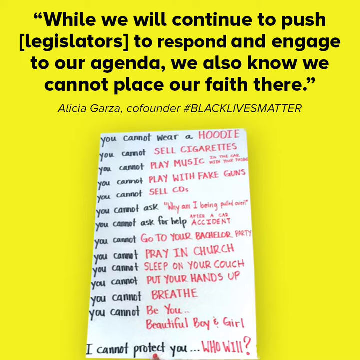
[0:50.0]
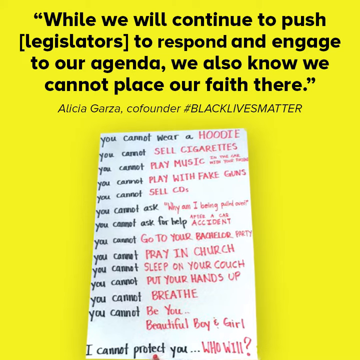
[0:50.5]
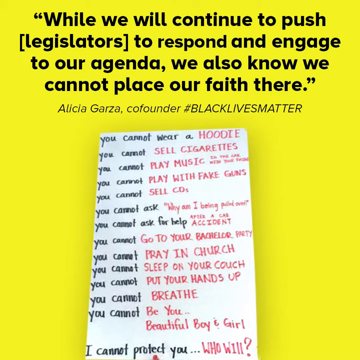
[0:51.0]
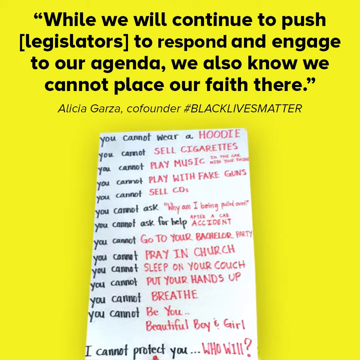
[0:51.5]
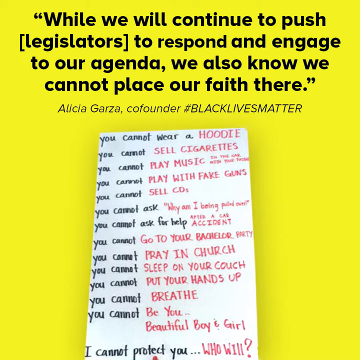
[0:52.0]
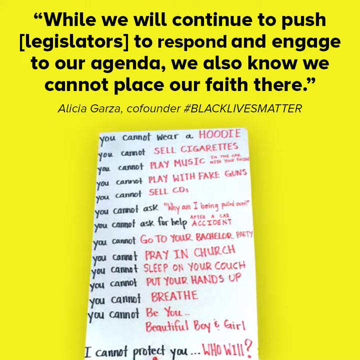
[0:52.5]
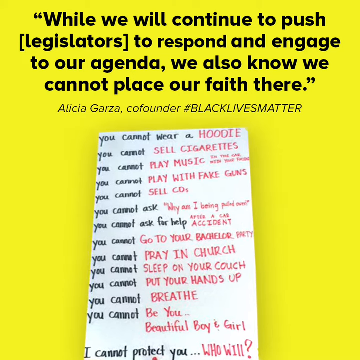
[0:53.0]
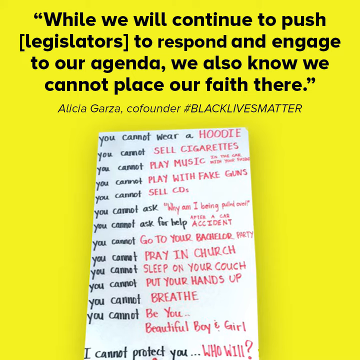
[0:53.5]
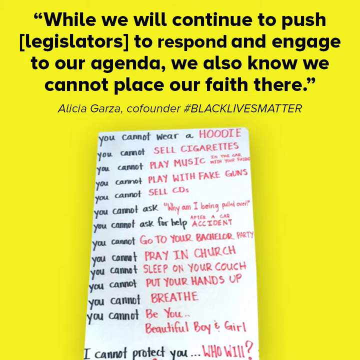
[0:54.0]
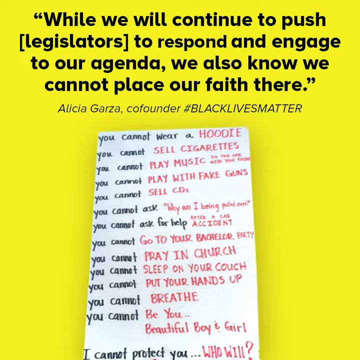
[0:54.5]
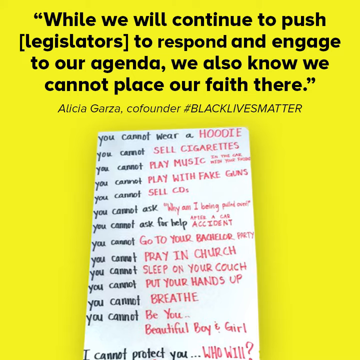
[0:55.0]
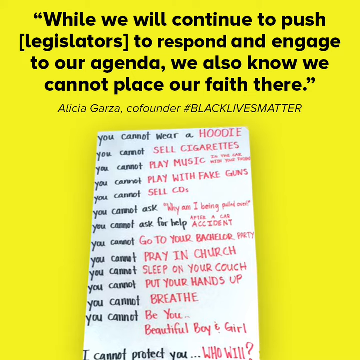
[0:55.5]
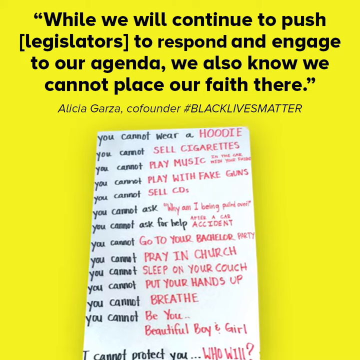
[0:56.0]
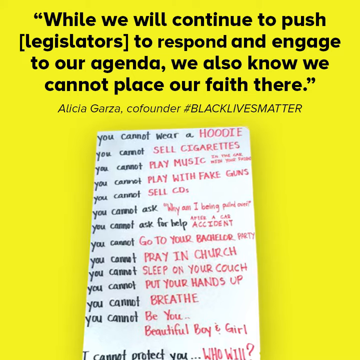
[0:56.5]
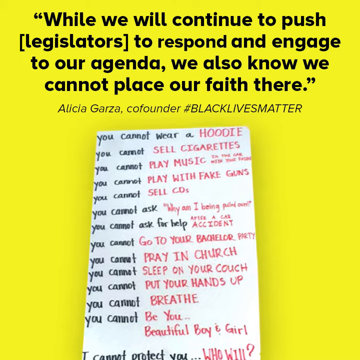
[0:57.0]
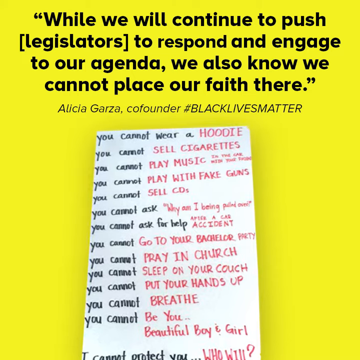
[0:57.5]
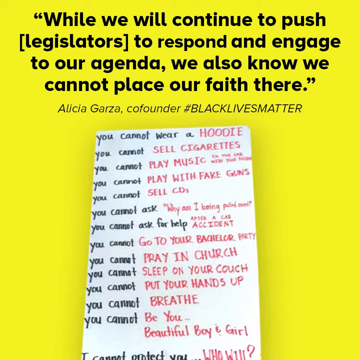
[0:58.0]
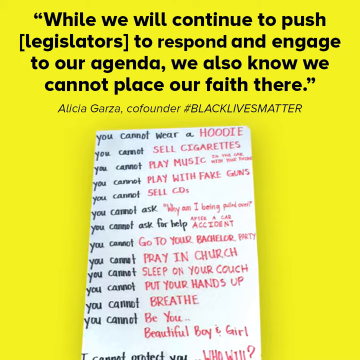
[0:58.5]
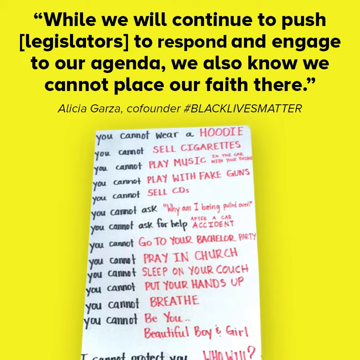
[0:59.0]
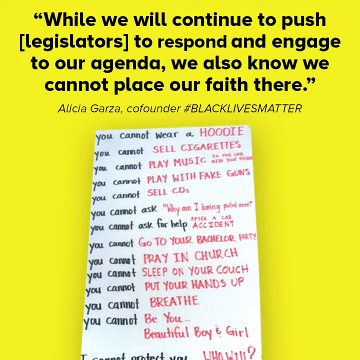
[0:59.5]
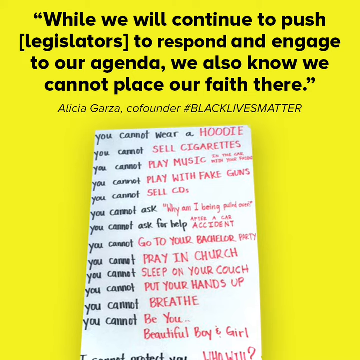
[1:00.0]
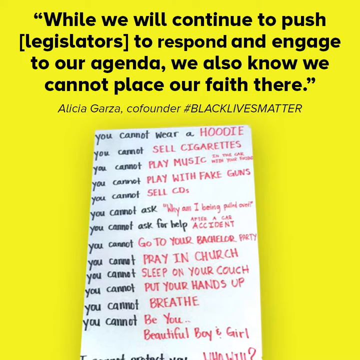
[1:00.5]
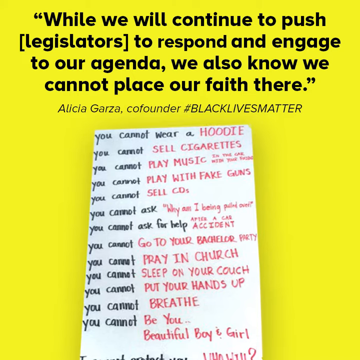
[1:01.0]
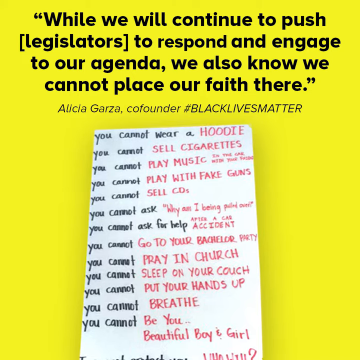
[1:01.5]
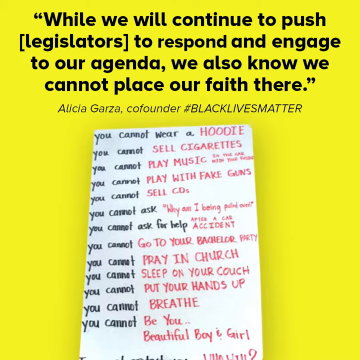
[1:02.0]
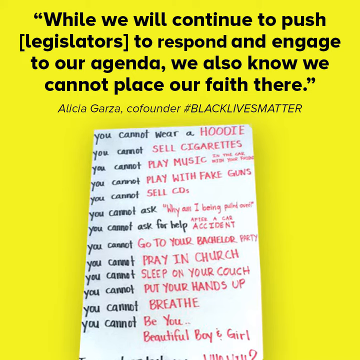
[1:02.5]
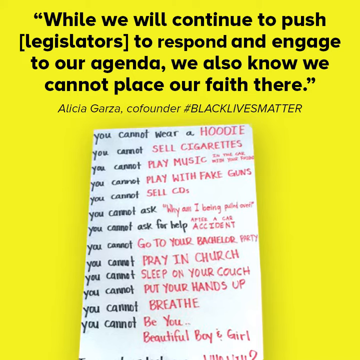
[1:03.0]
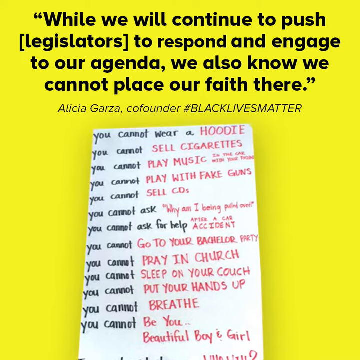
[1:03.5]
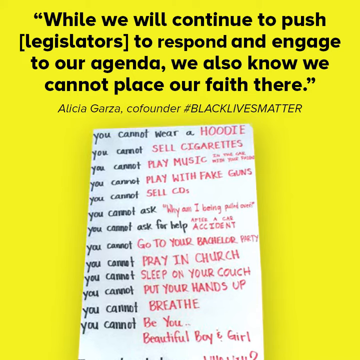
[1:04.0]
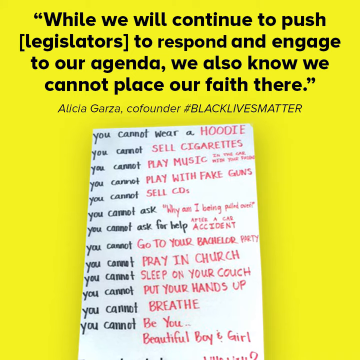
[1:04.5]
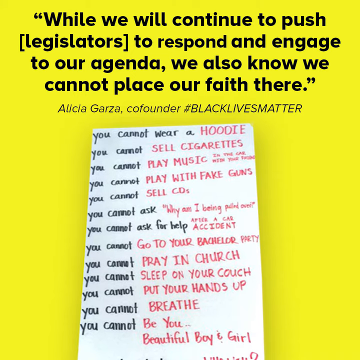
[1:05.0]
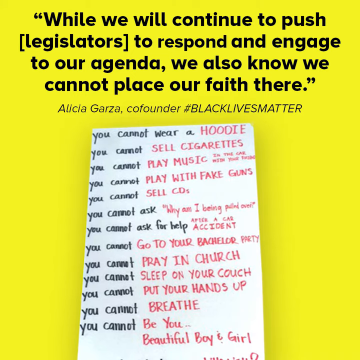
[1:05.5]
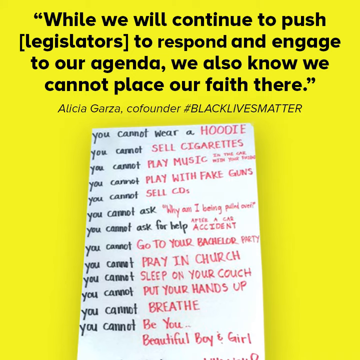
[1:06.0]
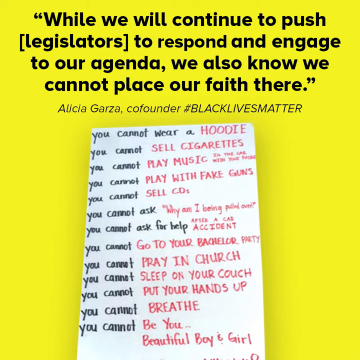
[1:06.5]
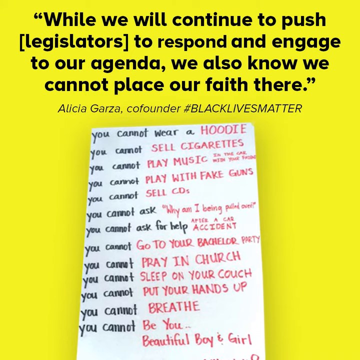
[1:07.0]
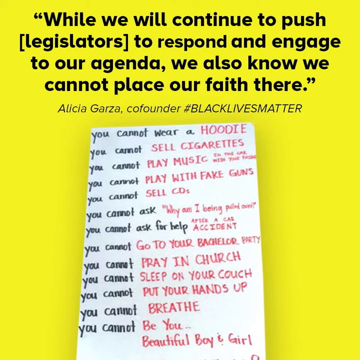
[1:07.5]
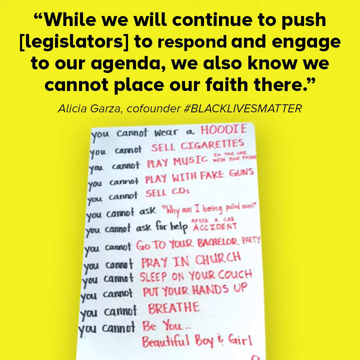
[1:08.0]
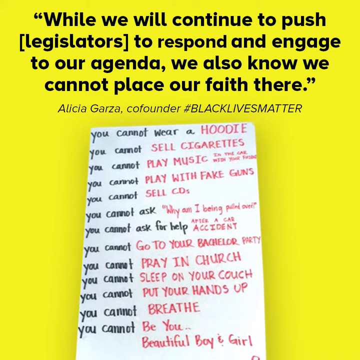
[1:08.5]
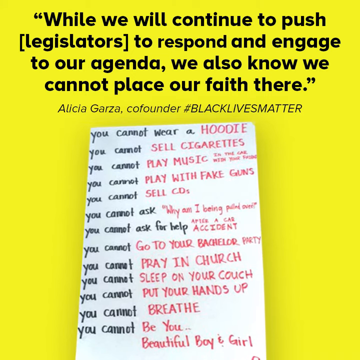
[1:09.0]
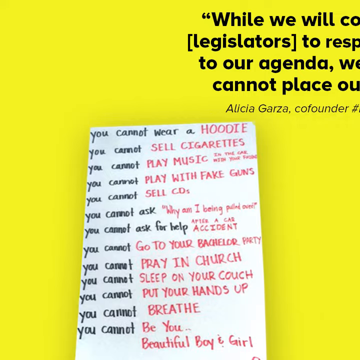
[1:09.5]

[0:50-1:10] A yellow background fades to black at the bottom, with black lettering in the top space reading: "while we will continue to push legislators to respond and engage to our agenda, we also know we cannot place our faith there." It is attributed to Alicia Garza, co-founder of #Black Lives Matter. A graphic inlaid on the bottom of the screen says "you cannot wear a hoodie, you cannot sell cigarettes, you cannot play music, you cannot play with fake guns, you cannot sell CDs" and continues with lines including "you cannot ask for help," "you cannot go to your bachelor party, you cannot pray in church, you cannot sleep on your couch, you cannot put your hands up, you cannot breathe, you cannot be you, beautiful boy and girl, if I cannot save you, who will?"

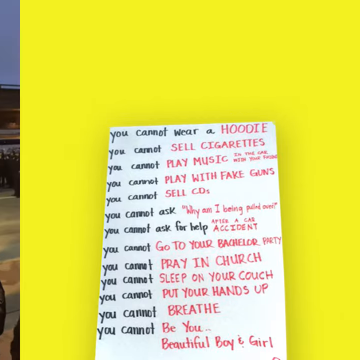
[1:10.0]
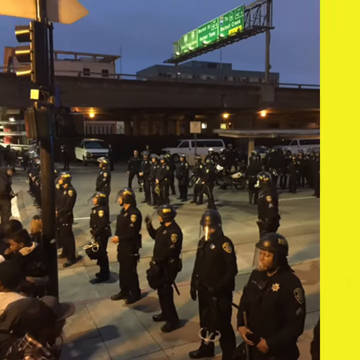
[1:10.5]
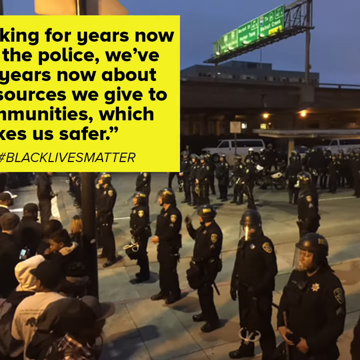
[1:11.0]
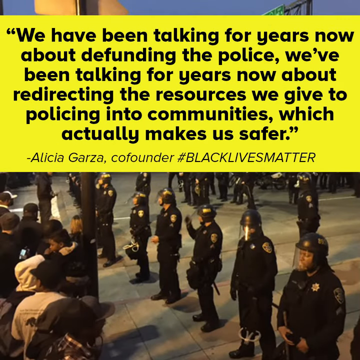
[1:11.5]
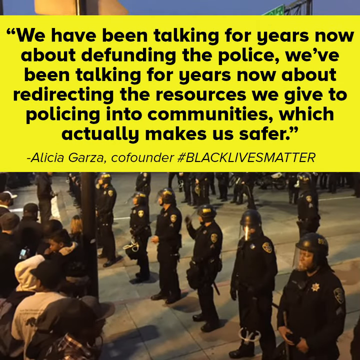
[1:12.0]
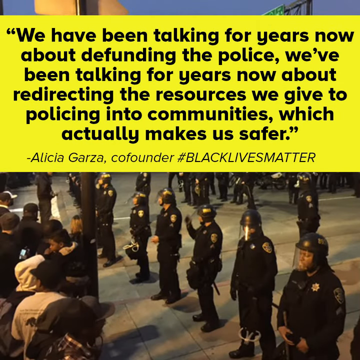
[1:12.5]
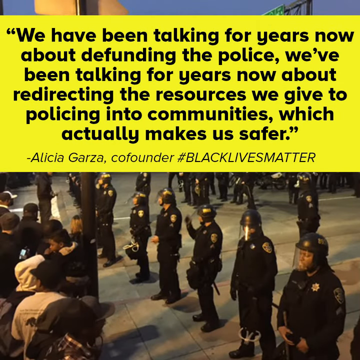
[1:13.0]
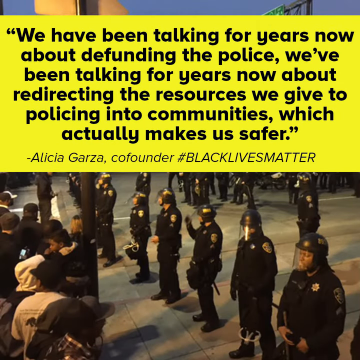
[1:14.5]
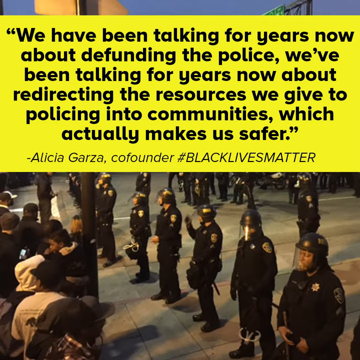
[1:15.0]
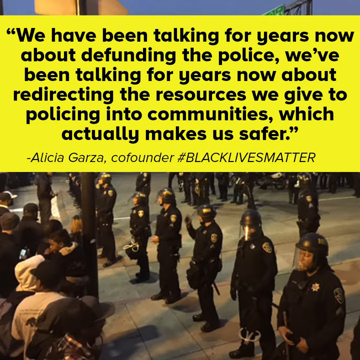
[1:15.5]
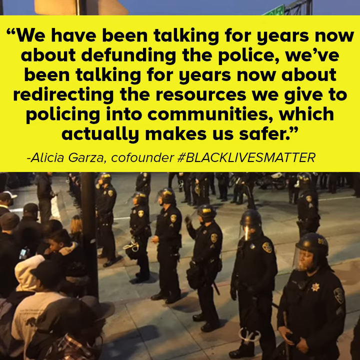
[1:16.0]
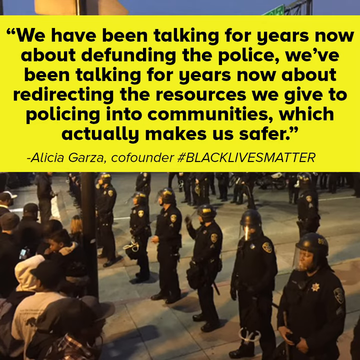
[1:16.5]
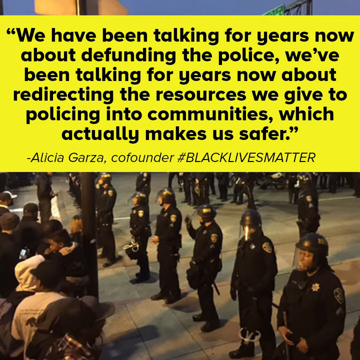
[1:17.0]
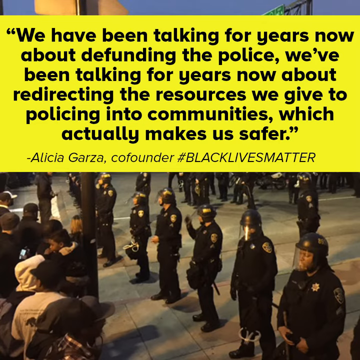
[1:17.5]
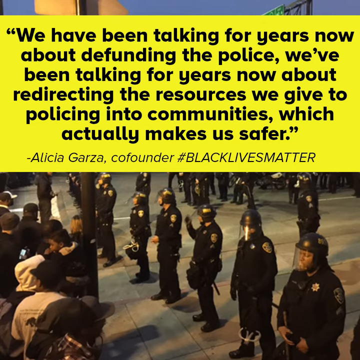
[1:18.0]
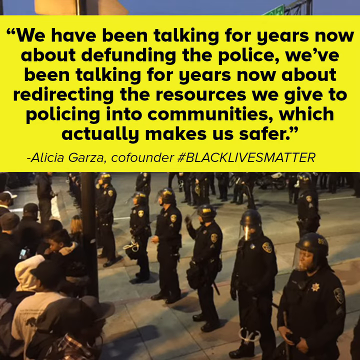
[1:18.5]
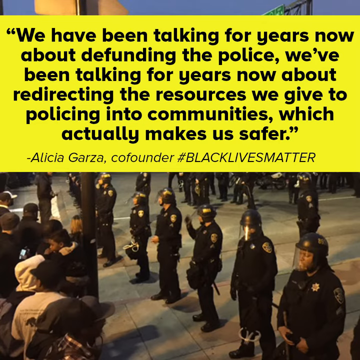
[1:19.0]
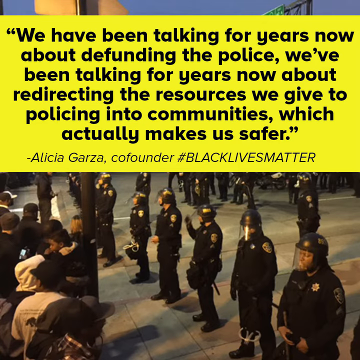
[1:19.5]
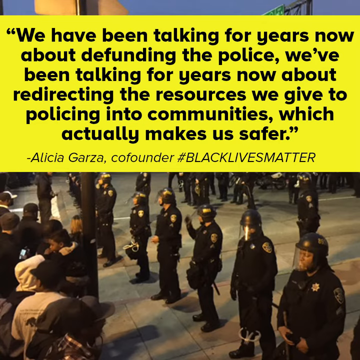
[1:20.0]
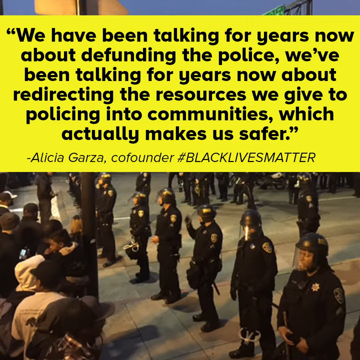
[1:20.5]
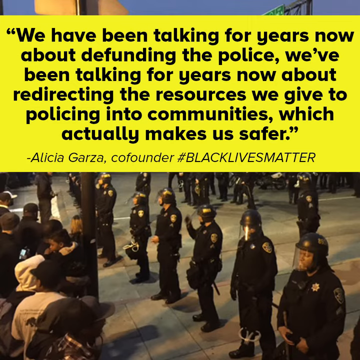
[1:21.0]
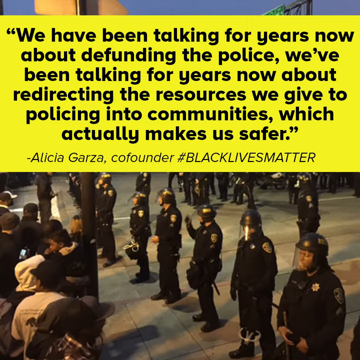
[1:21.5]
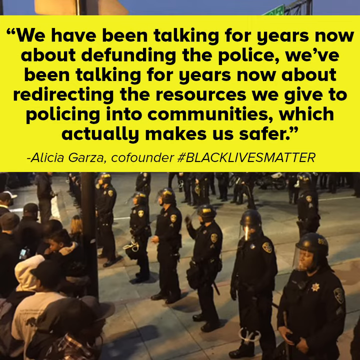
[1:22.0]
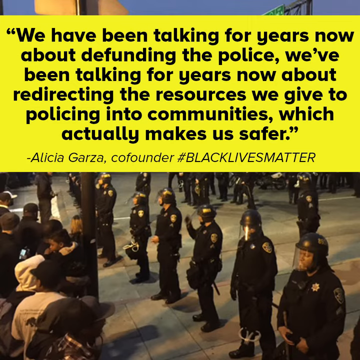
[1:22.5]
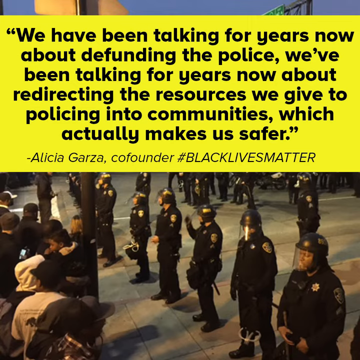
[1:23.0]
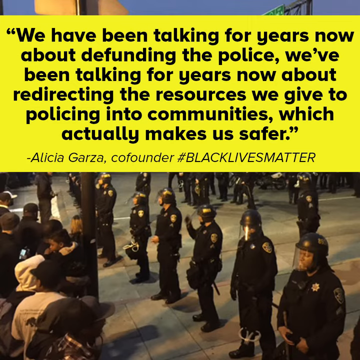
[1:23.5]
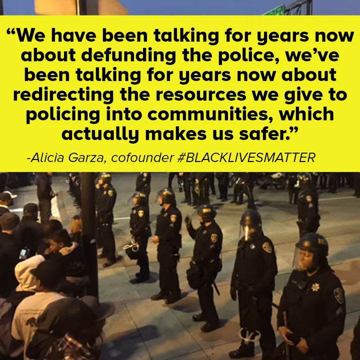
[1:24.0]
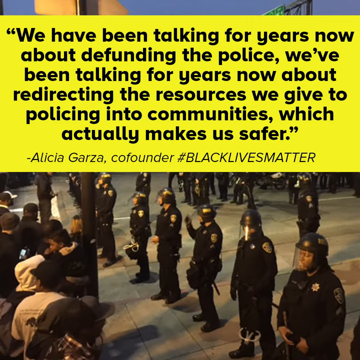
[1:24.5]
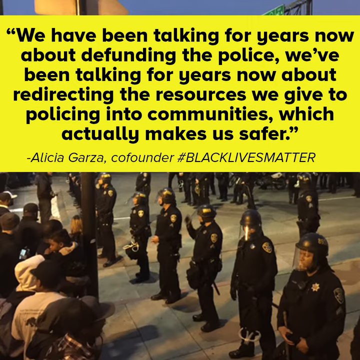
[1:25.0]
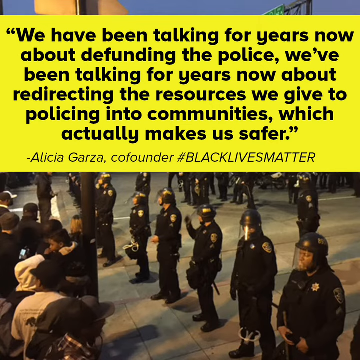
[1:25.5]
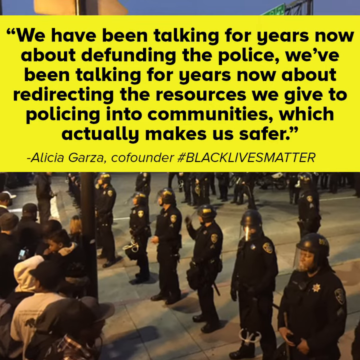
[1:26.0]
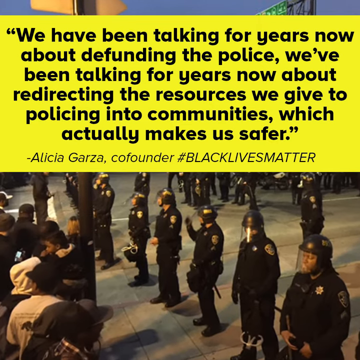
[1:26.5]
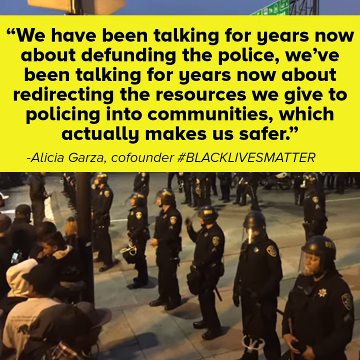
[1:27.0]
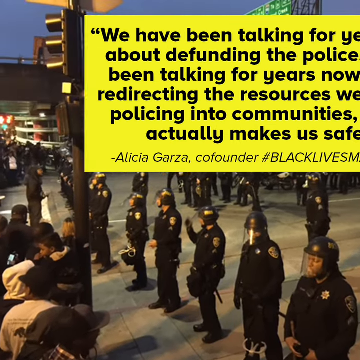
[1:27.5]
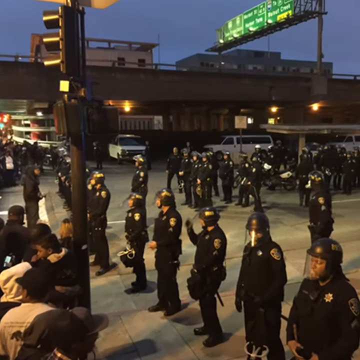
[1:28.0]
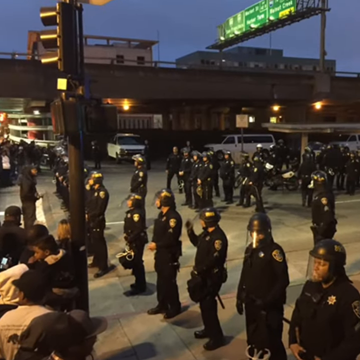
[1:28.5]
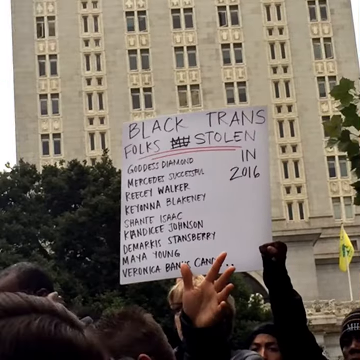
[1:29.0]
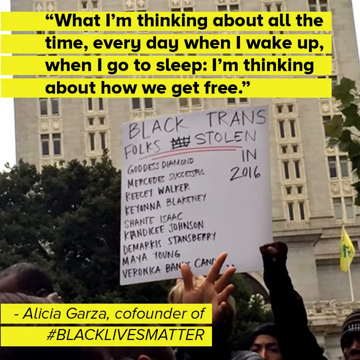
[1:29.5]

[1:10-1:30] The background picture shows police in full riot gear with helmets, batons, and bulletproof vests, who seem to be at odds with a group of people. Over the top, a yellow box with black lettering reads: "we have been talking for years now about defunding the police. We've been talking for years about redirecting the resources we give to policing into communities which actually makes us safer." It is attributed to Alicia Garza, co-founder of #Black Lives Matter. About 50 police officers stand to the right in the background, in two to four rows, waiting for protesters. The protesters stand on the left half of the screen behind a pole; there seem to be just a handful of them, a couple of them recording on their phones.